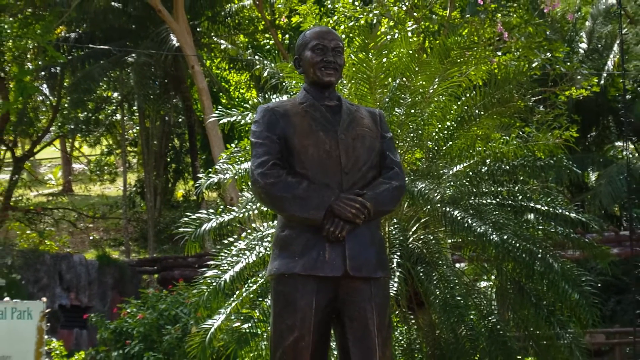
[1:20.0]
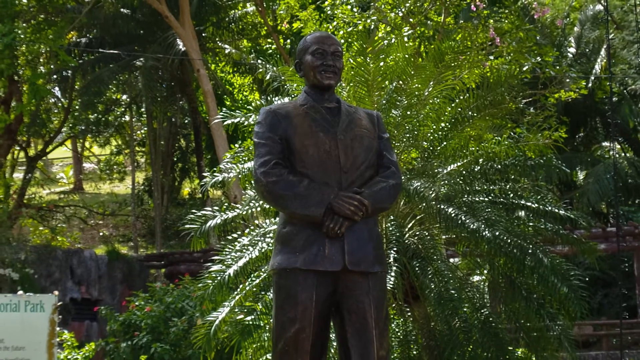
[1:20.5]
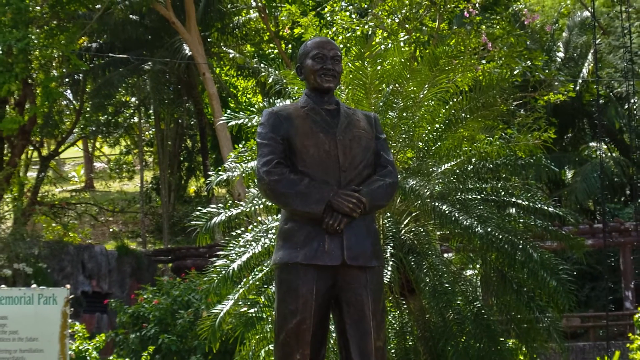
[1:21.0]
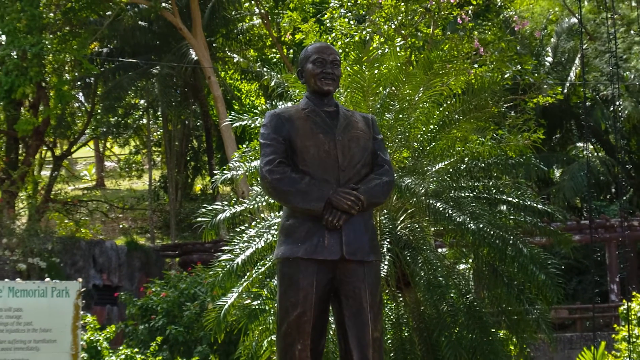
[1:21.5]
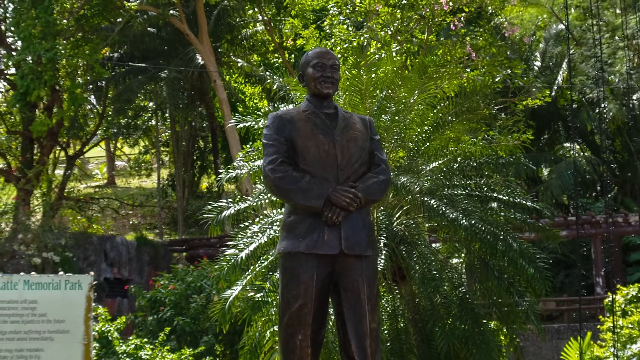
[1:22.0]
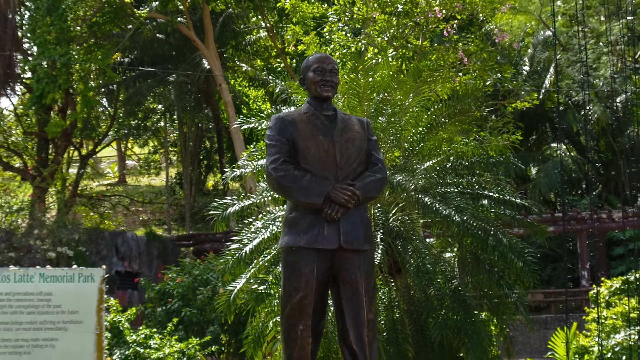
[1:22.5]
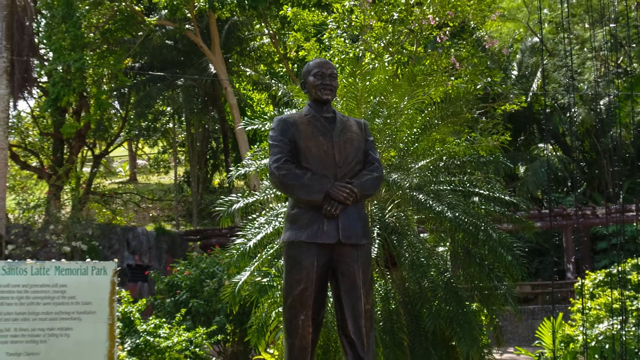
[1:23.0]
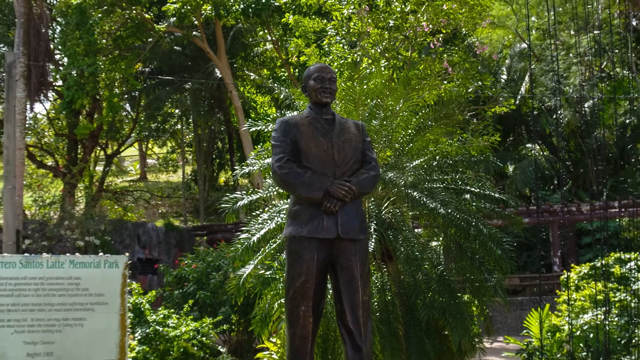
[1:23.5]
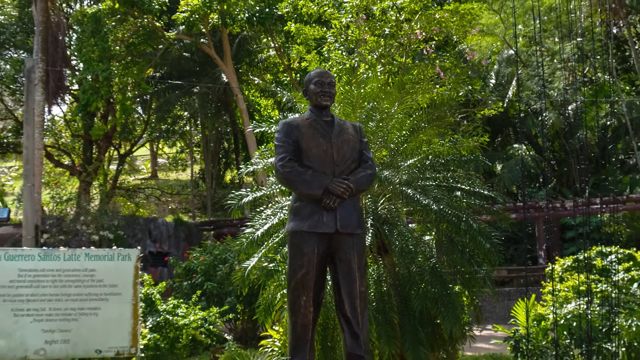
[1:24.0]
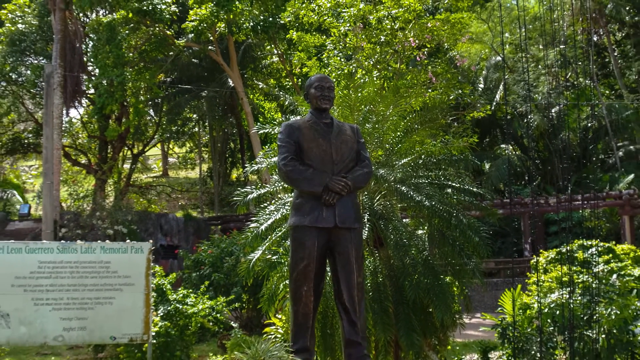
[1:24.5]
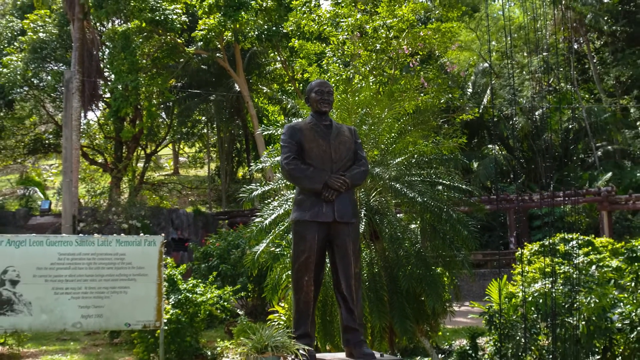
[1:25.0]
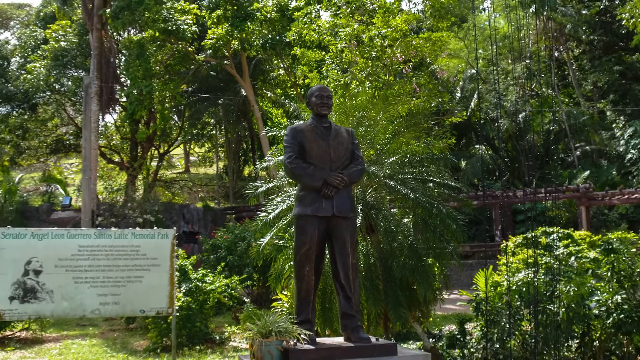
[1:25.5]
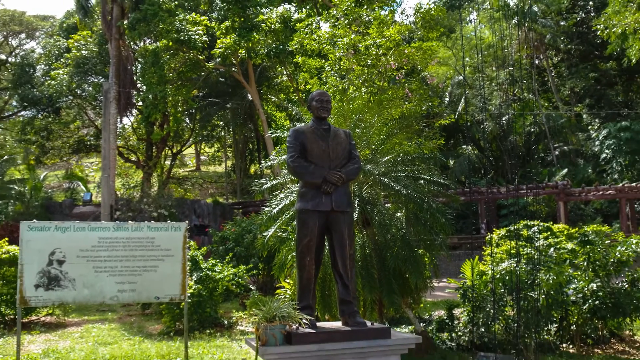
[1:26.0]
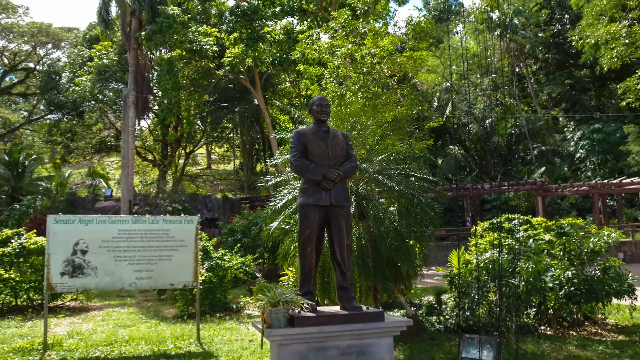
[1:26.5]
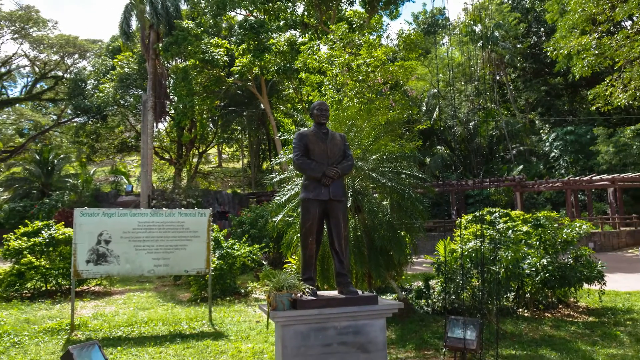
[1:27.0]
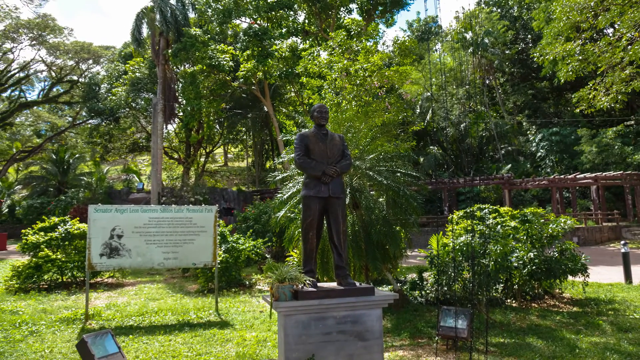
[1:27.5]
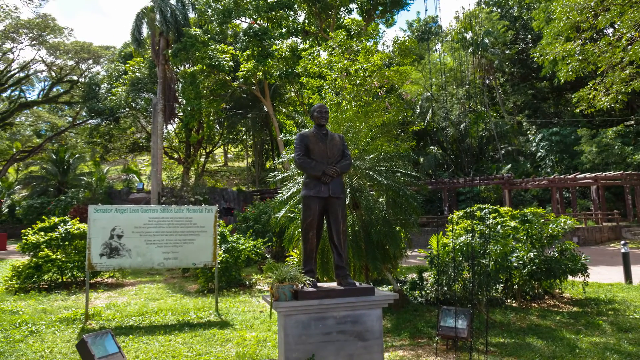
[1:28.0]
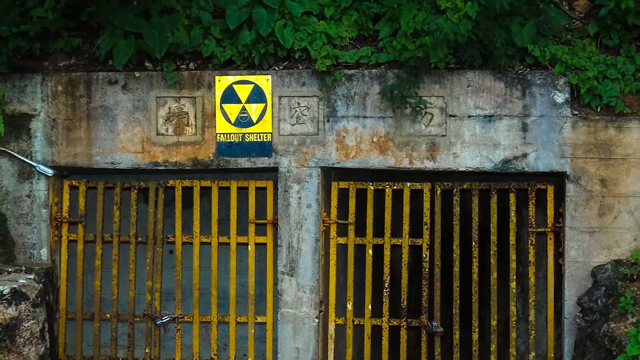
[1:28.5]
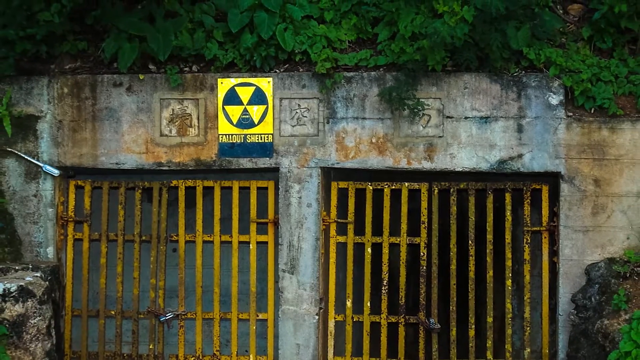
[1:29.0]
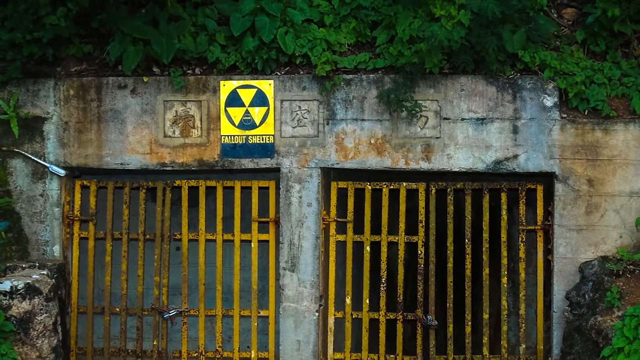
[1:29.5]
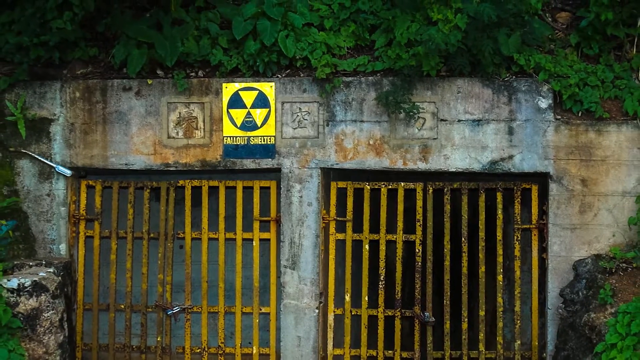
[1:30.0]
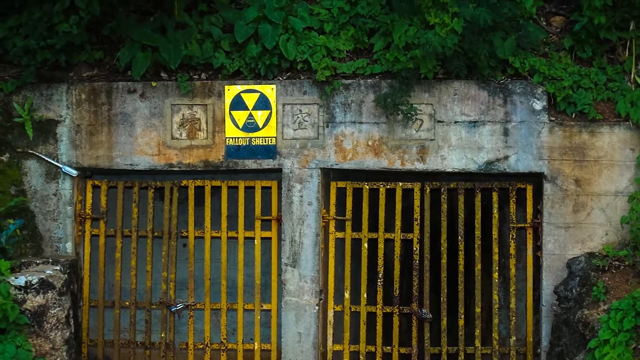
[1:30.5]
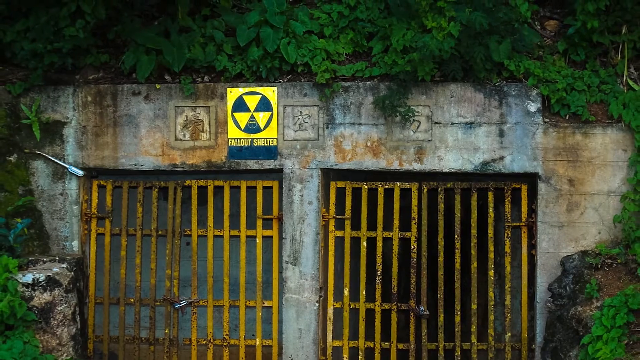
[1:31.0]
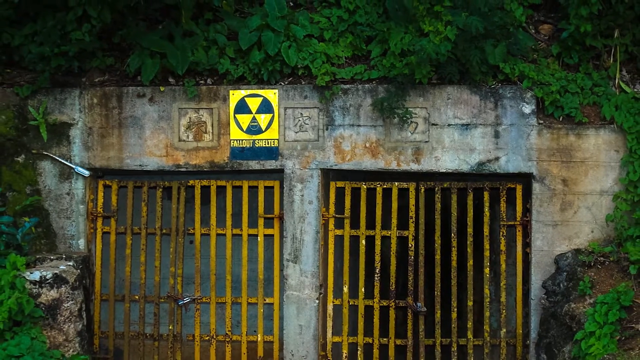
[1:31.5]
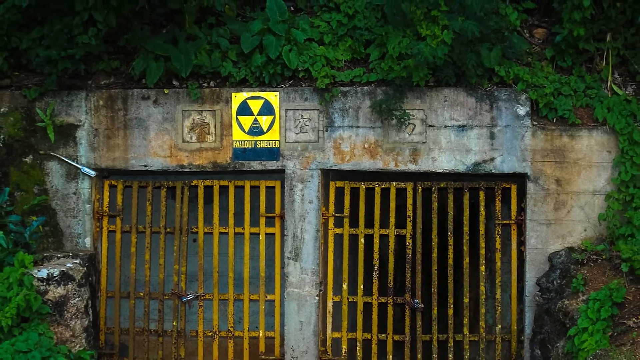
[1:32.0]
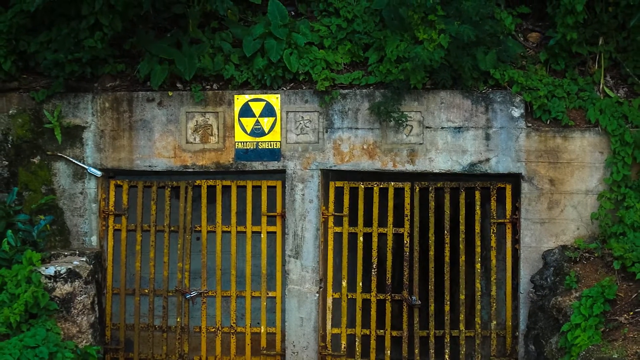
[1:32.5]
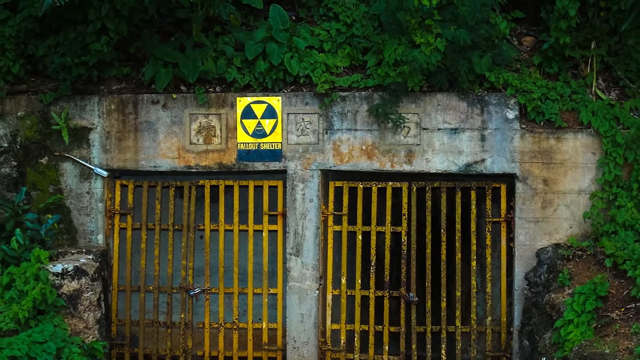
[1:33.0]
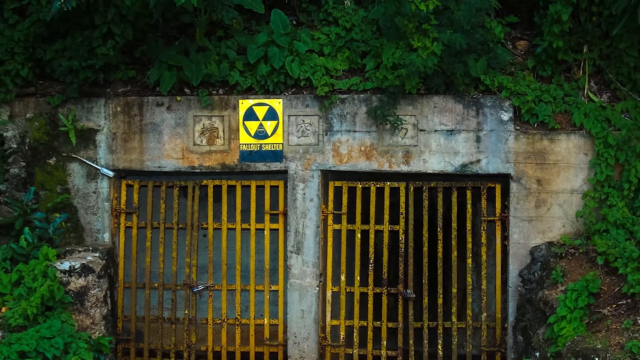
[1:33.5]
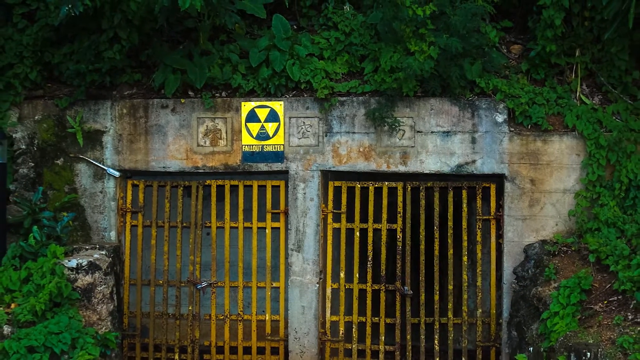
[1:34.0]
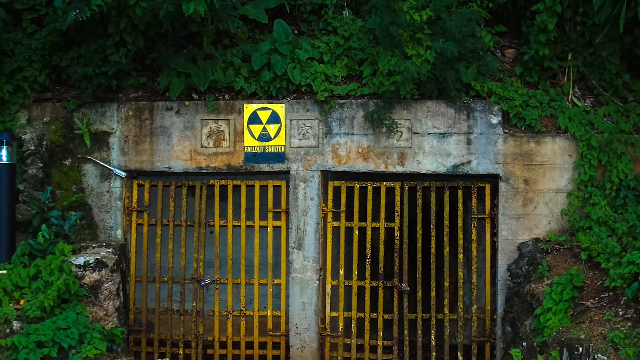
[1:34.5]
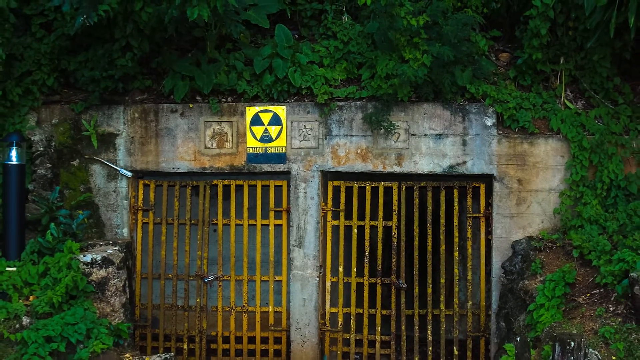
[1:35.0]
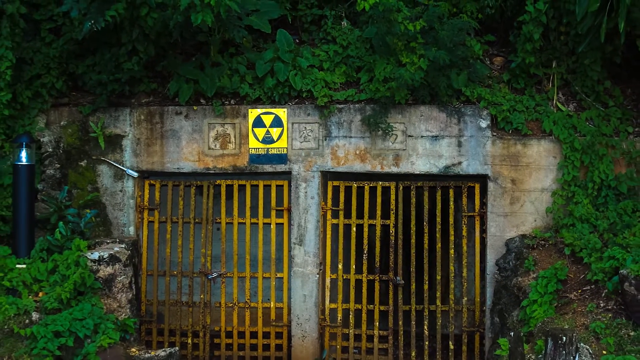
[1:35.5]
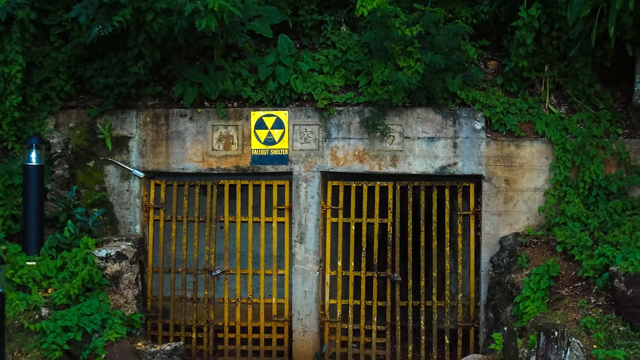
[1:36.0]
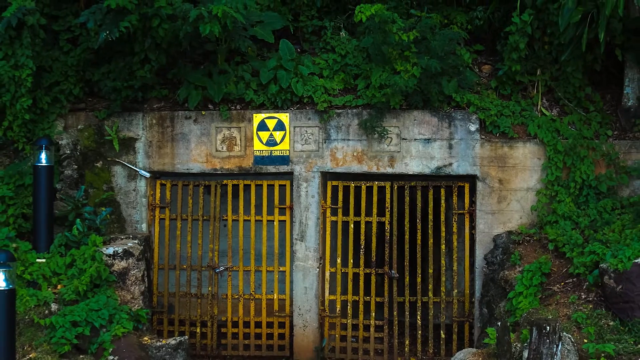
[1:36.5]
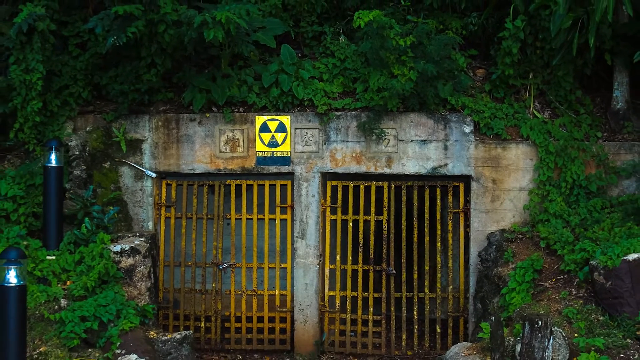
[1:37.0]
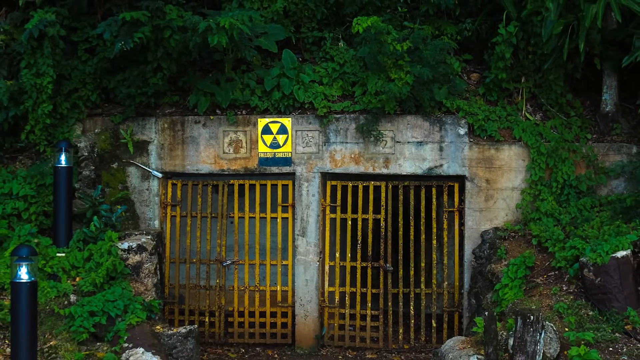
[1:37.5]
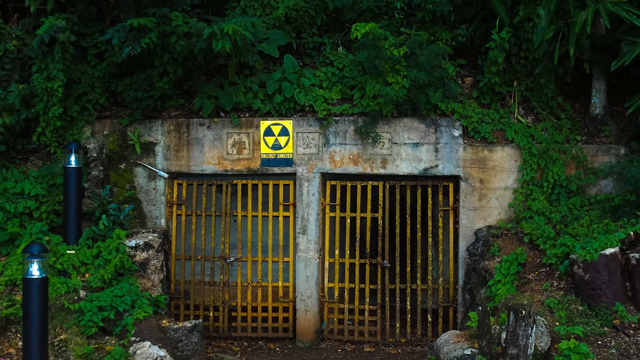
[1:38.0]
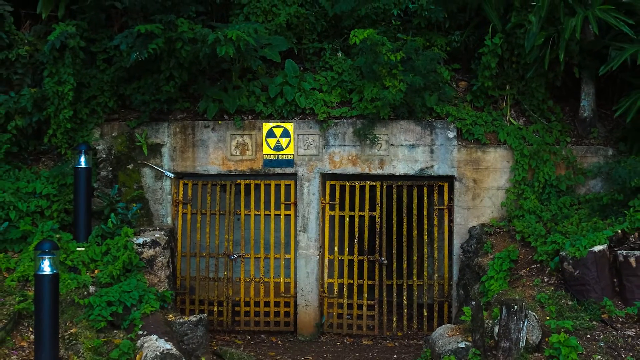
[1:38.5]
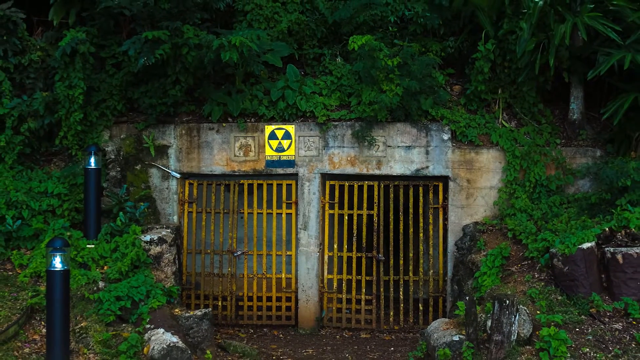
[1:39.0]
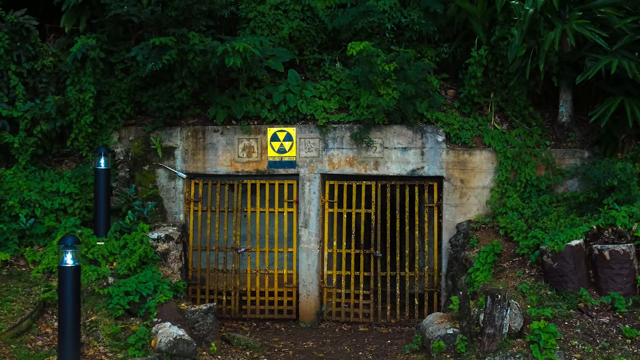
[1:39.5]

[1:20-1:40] The footage of the outdoor park continues with a bronze statue of a Japanese man standing in the middle of the shot. As the camera zooms back, a large white sign with green writing appears on the left of the screen, too blurry to read, with a photo of the Japanese man printed on it. The man has his right hand over his left wrist and is looking to the left of the screen. Behind him is a very large green fern, and behind that many tall green trees. The shot then changes to a fallout shelter made from concrete, with two rusted yellow gates at the front. Three Japanese characters are set into the concrete across the top of the shelter. Left of centre is a yellow and black sign that says "fallout shelter" with an icon representing radiation. There is greenery on either side of the shelter and across the top of the screen, and rocks on either side of the shelter. It looks derelict, as though it has not been in use for some time. As the camera moves backwards, two black cylindrical streetlights appear on the left of the shot.